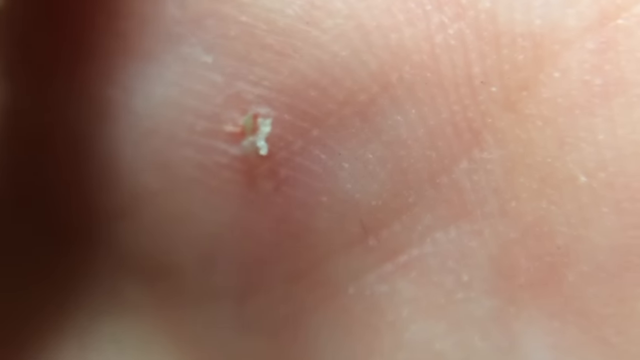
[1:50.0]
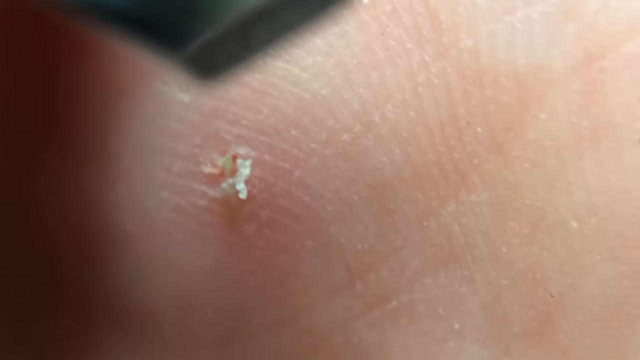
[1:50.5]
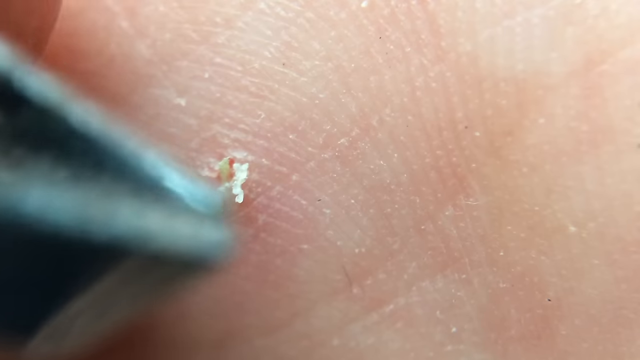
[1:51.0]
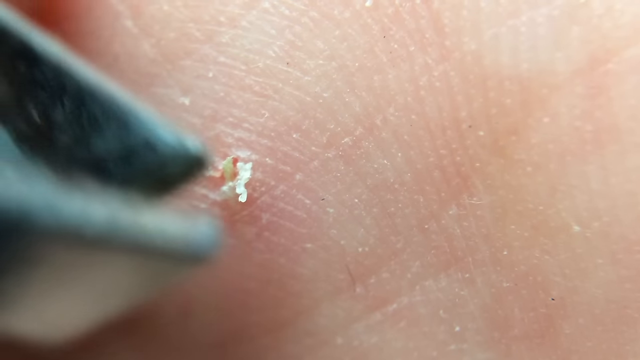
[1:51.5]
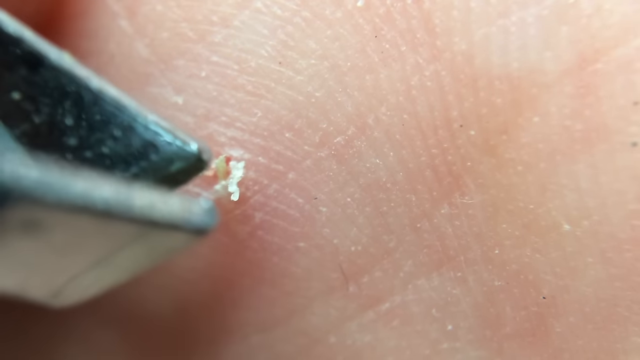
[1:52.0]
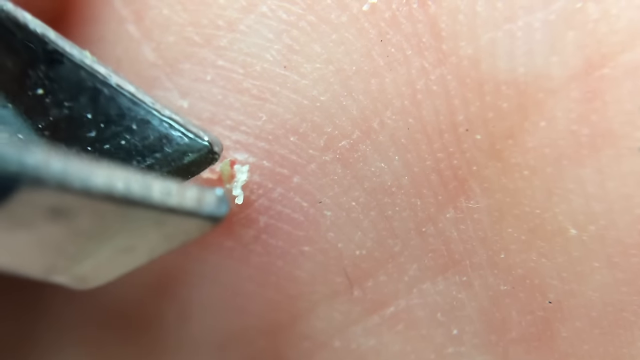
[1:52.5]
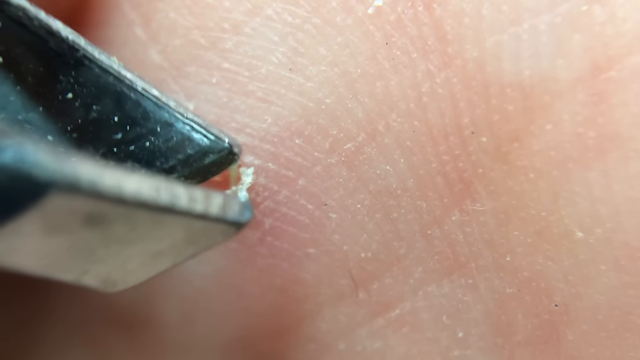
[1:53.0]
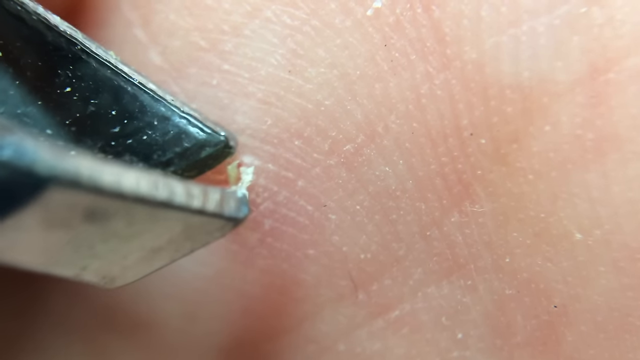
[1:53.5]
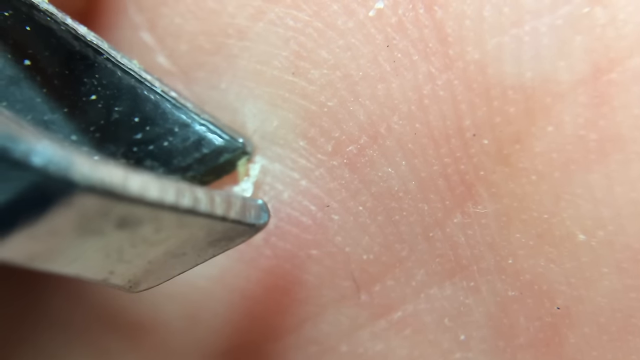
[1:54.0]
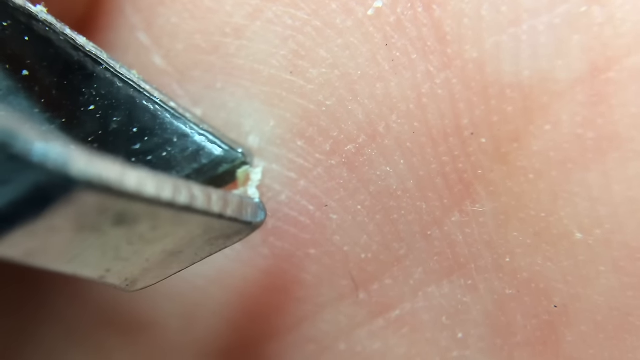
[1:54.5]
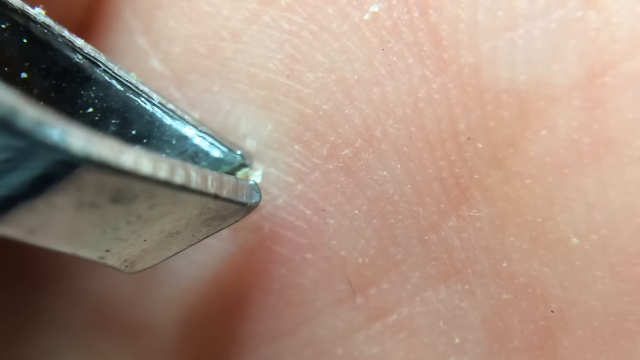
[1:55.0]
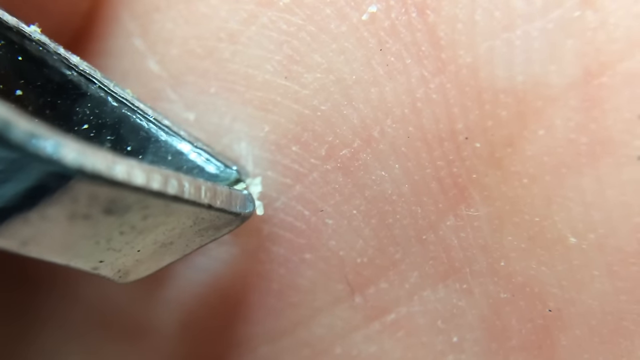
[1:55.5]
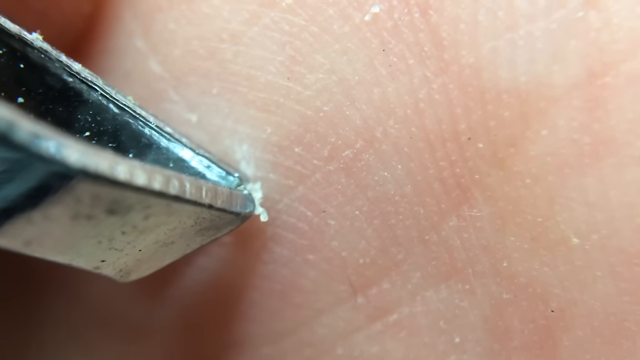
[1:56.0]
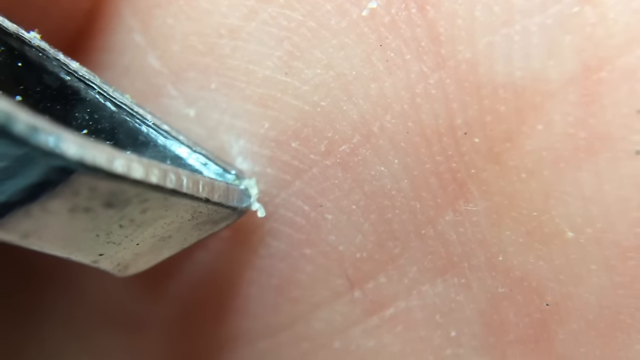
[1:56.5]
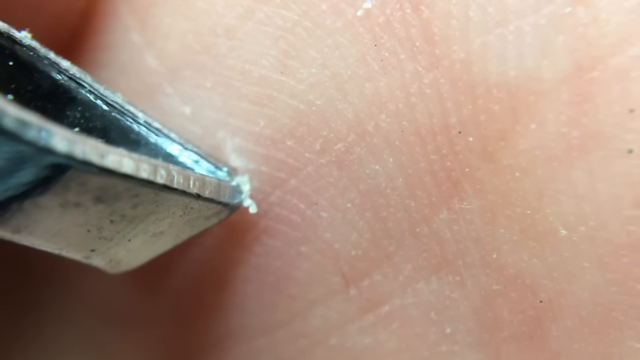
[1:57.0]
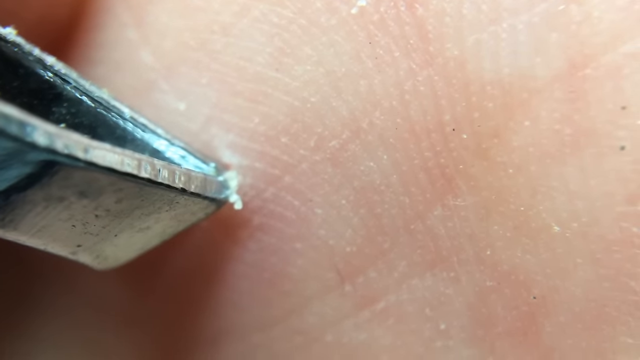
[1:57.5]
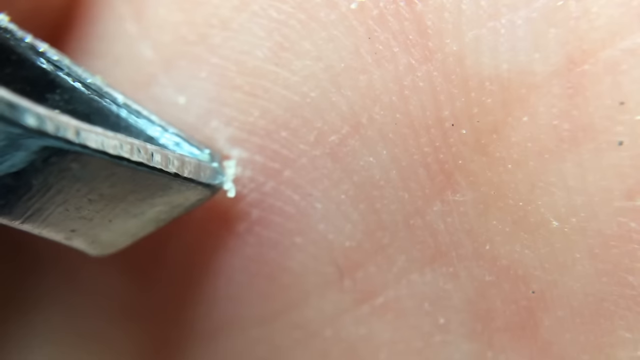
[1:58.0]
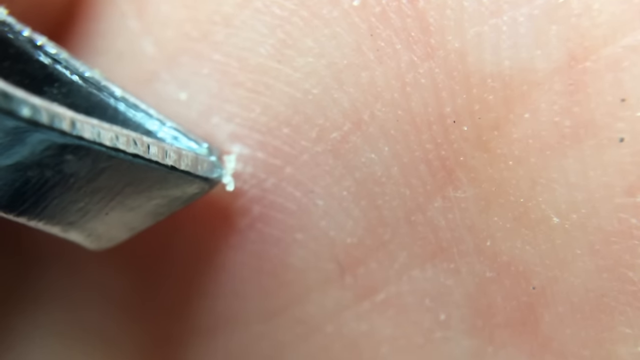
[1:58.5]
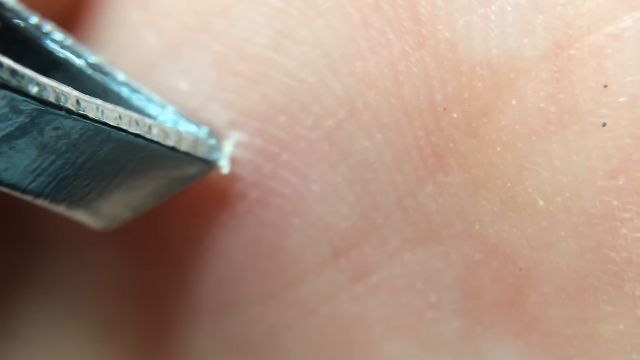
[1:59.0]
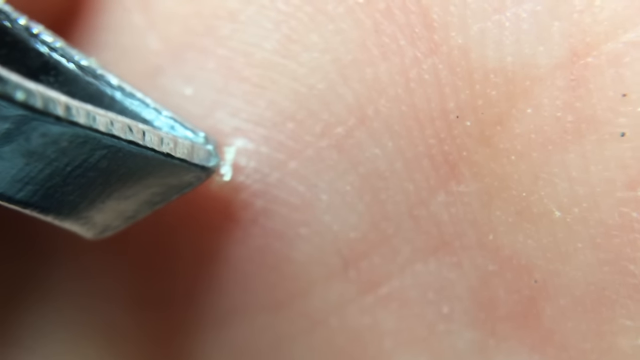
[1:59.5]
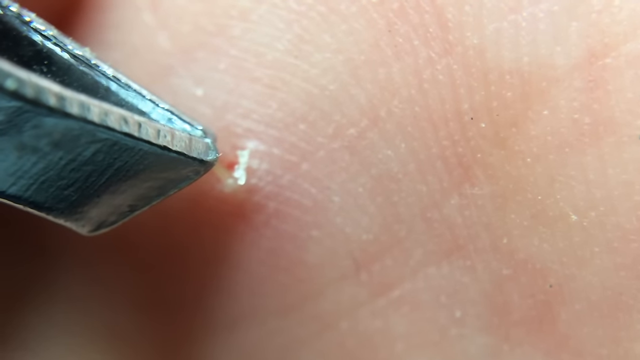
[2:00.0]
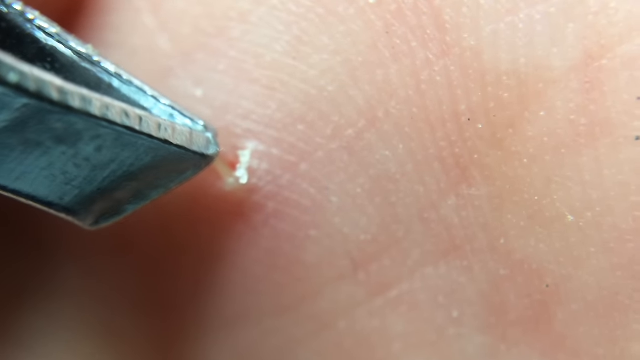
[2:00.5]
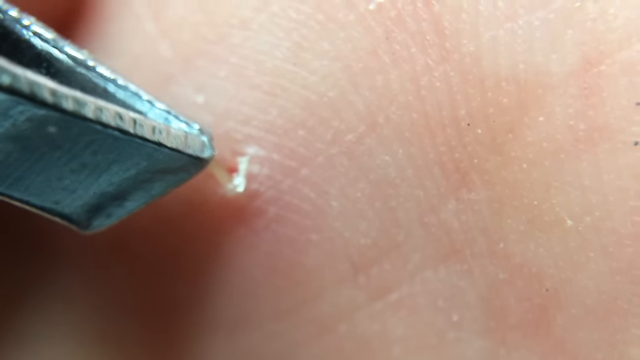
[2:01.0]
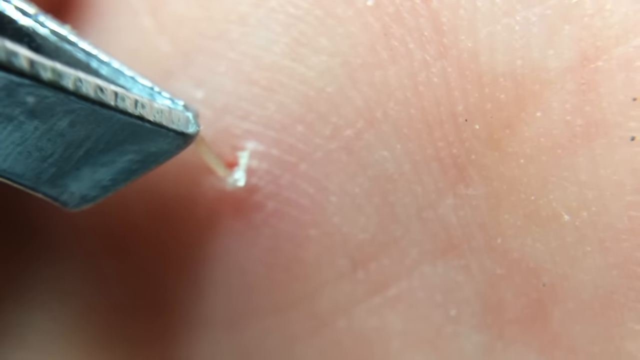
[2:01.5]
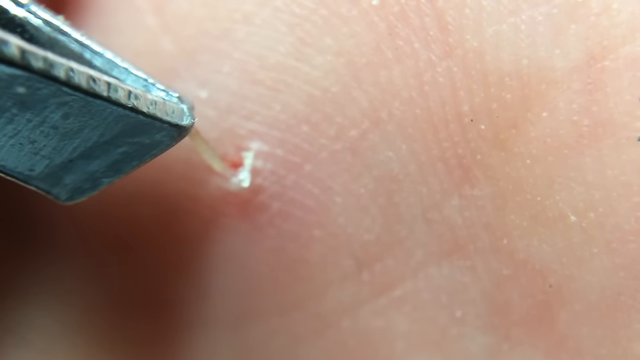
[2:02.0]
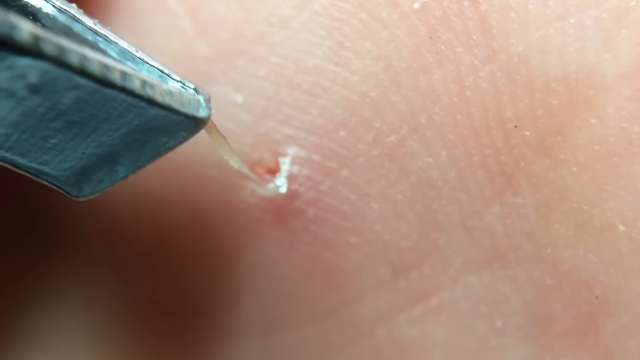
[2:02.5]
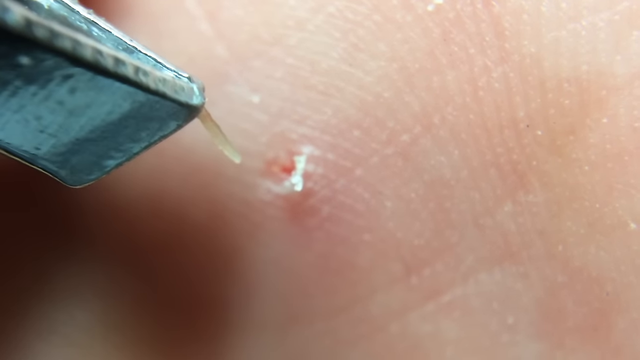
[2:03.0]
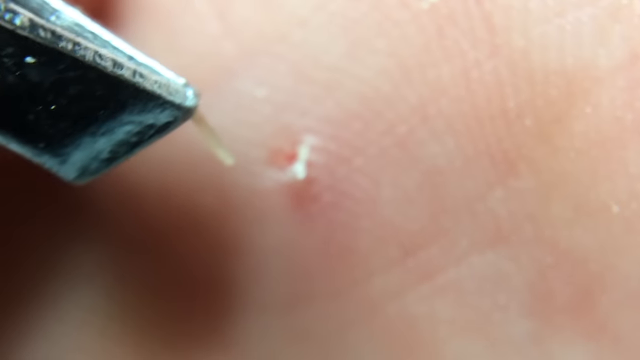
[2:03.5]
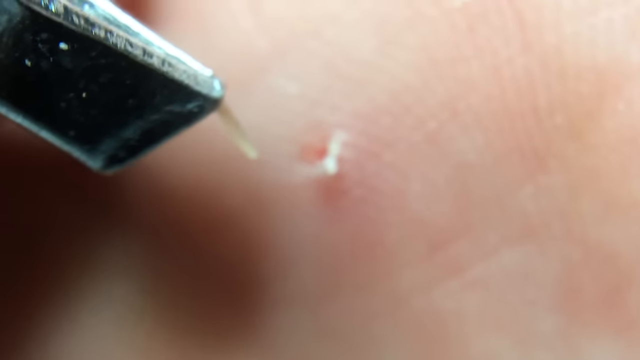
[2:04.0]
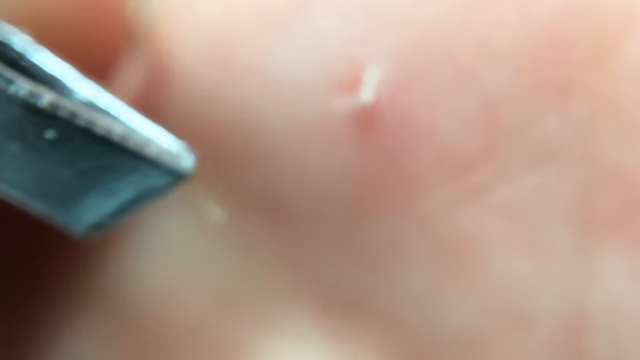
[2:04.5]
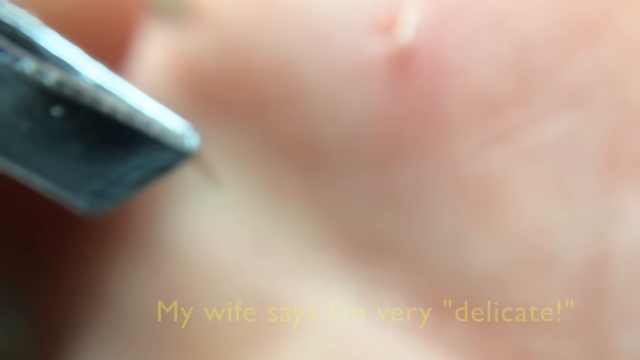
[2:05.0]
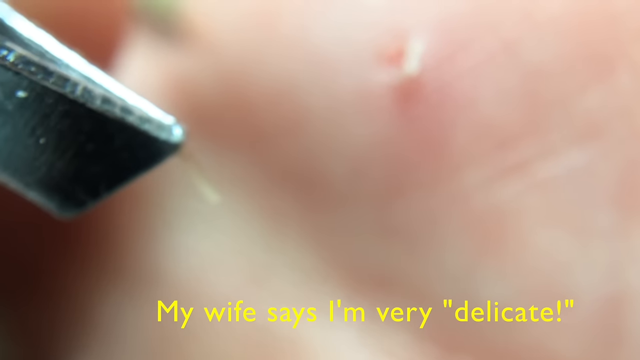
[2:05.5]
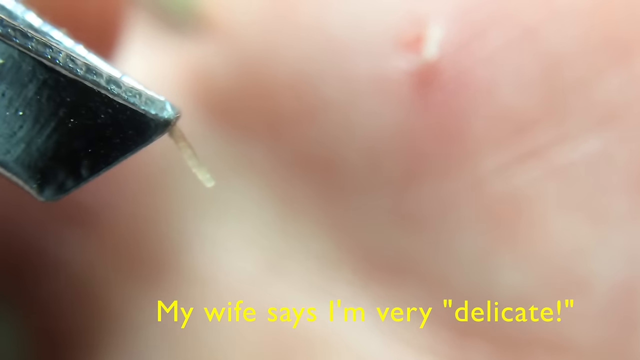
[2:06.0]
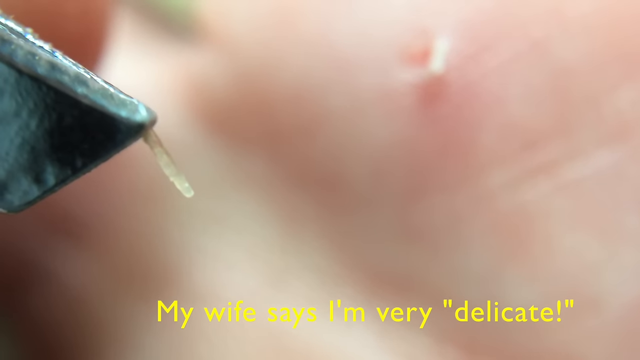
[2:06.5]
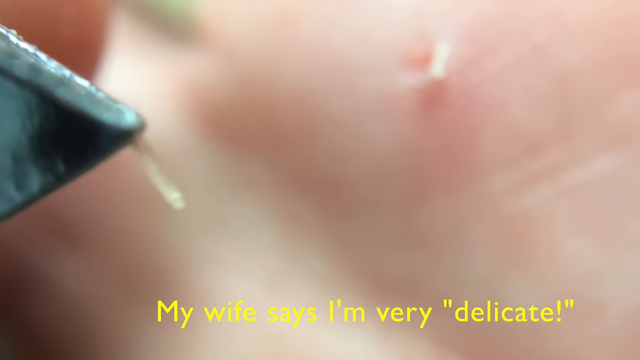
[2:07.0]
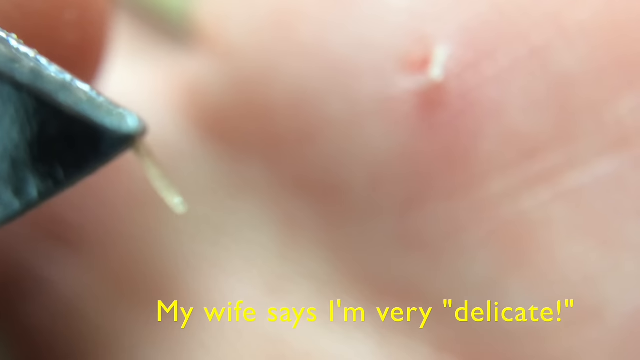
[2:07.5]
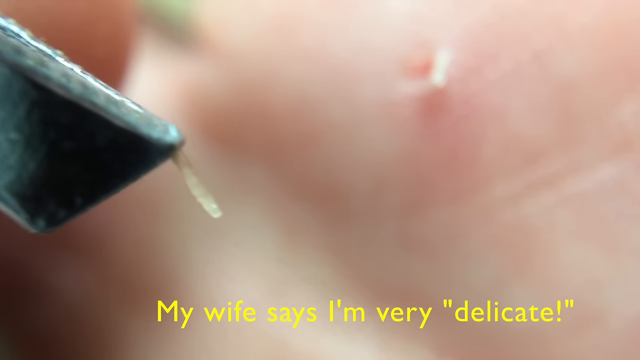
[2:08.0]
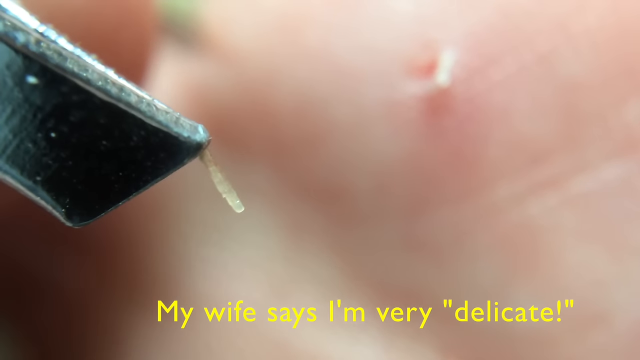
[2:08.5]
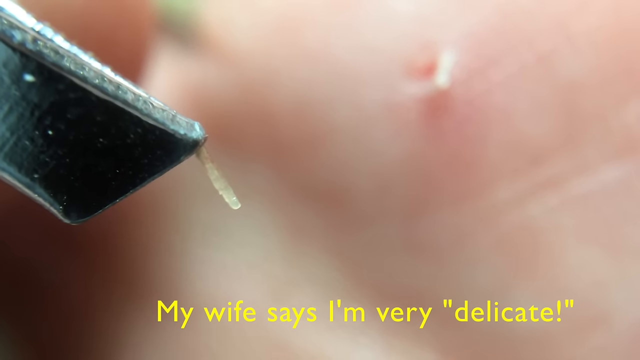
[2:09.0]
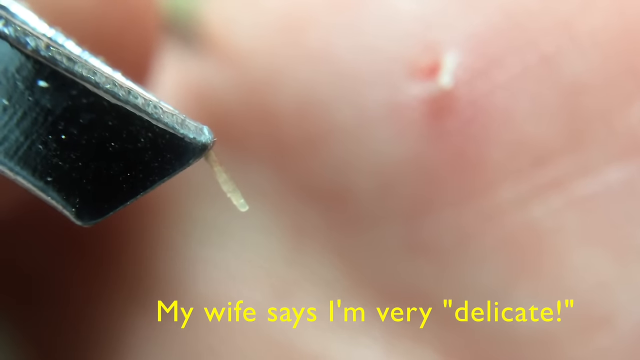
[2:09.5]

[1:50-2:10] A very zoomed-in close-up shows someone's palm, apparently the right palm, with a splinter stuck in it. Around the outside of the splinter are pieces of skin that have been torn away with the needle, and the splinter has been worked out so a little of it is sticking out. The very tip of a shiny pair of metal tweezers comes into frame, goes over the splinter and squeezes down onto it. The tweezers slowly pull backwards, pulling the splinter out of his hand. Once it is out, there is a small hole in his palm with a little blood in it and white skin around the outside of the hole. Along the bottom of the screen, text reads "my wife says I'm very delicate".